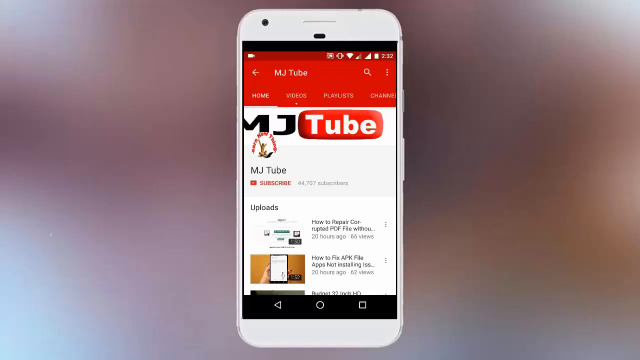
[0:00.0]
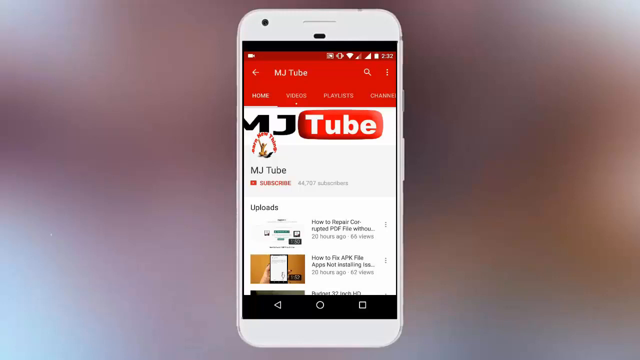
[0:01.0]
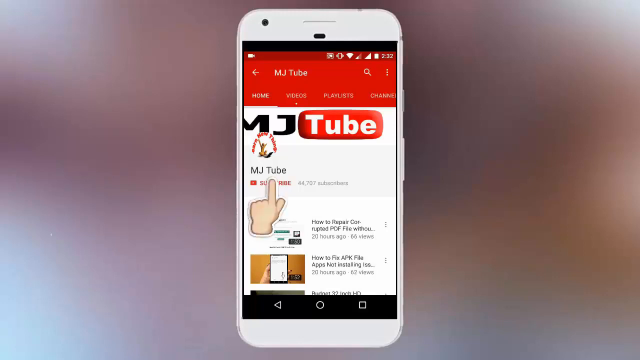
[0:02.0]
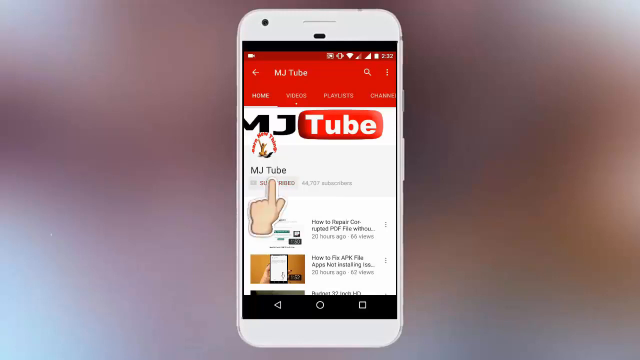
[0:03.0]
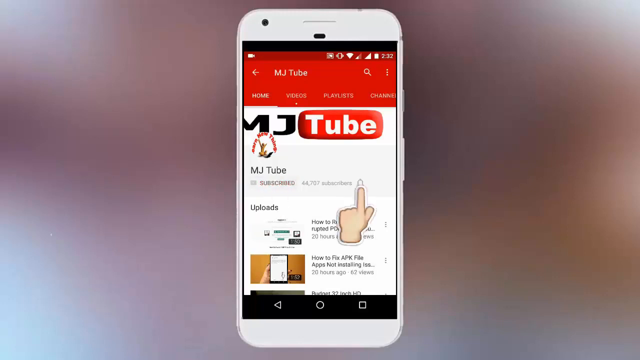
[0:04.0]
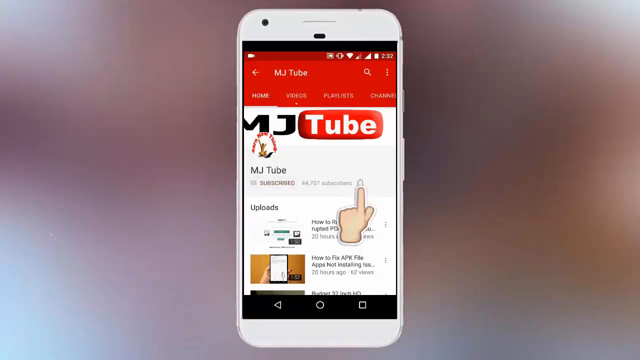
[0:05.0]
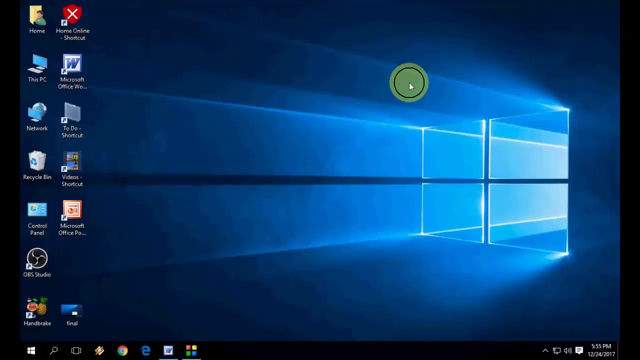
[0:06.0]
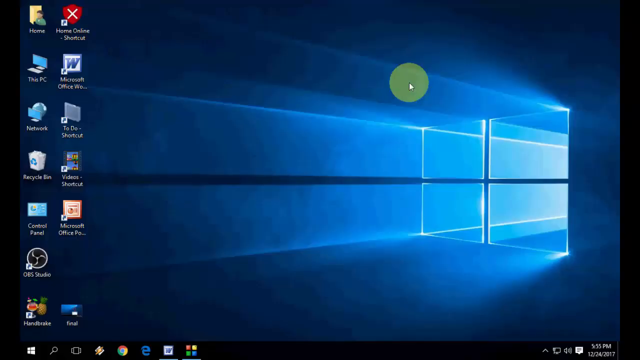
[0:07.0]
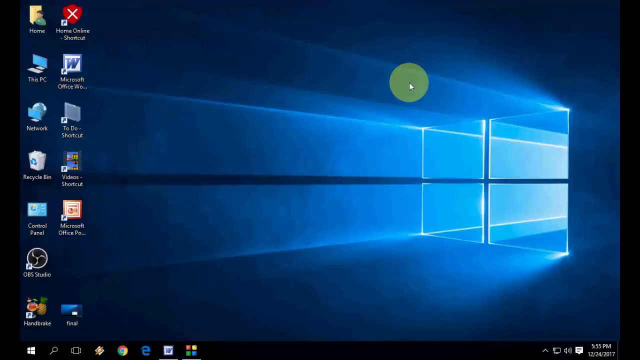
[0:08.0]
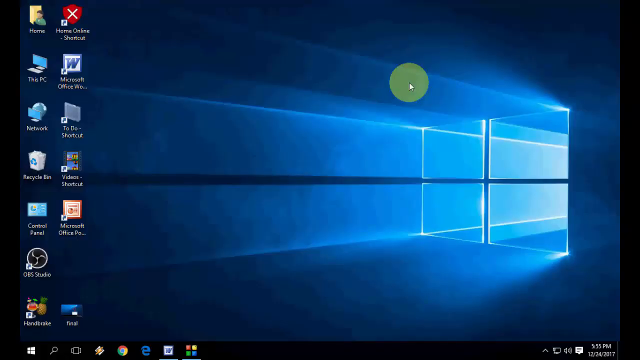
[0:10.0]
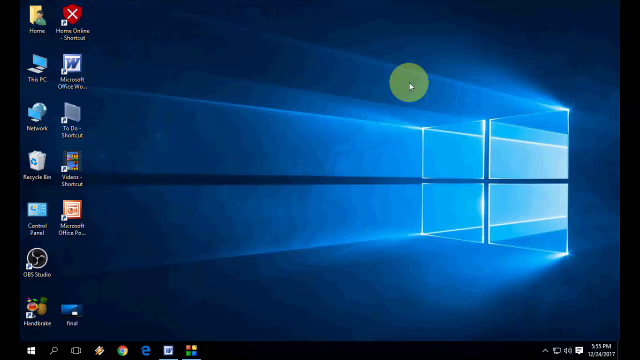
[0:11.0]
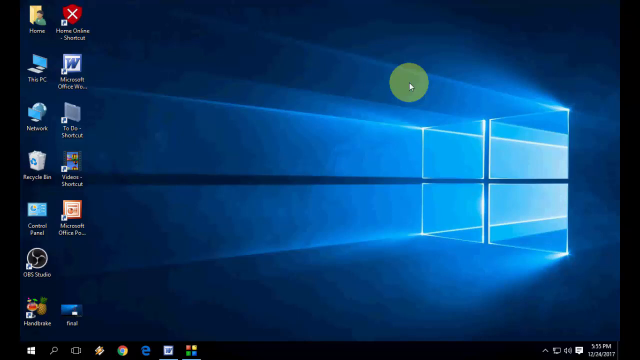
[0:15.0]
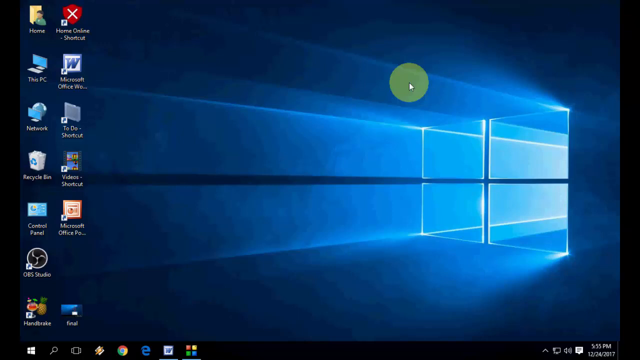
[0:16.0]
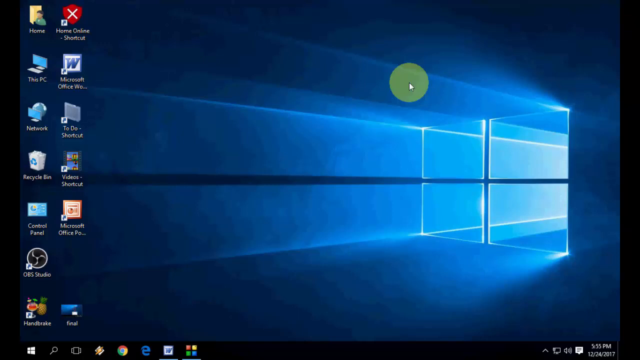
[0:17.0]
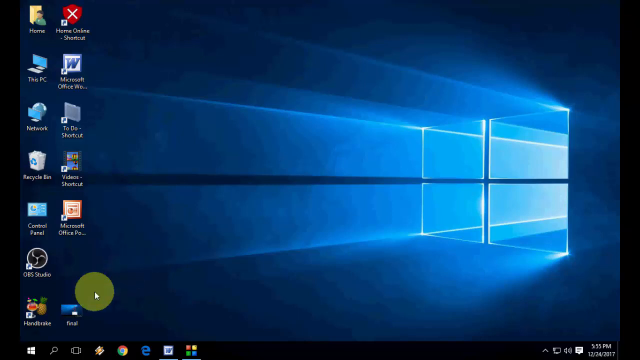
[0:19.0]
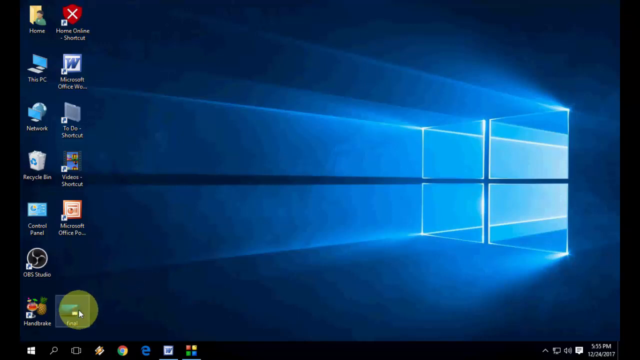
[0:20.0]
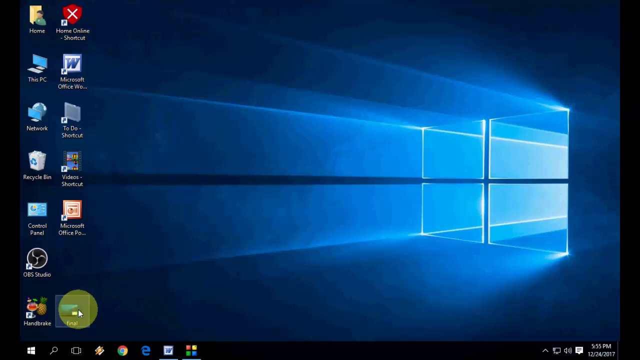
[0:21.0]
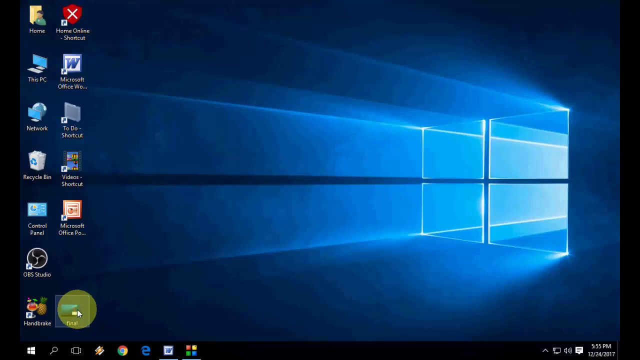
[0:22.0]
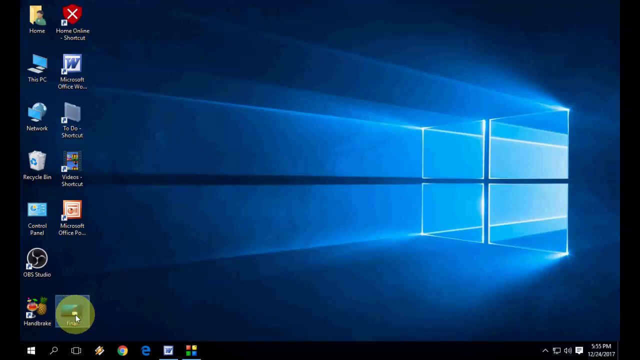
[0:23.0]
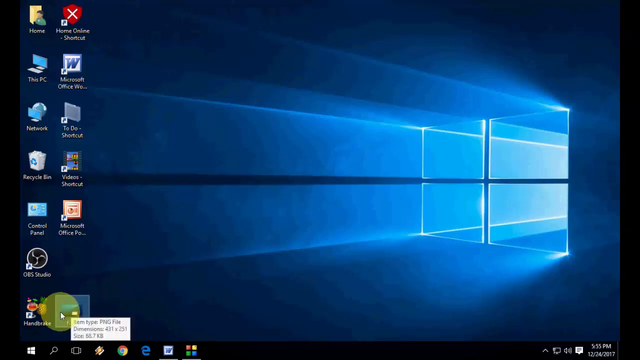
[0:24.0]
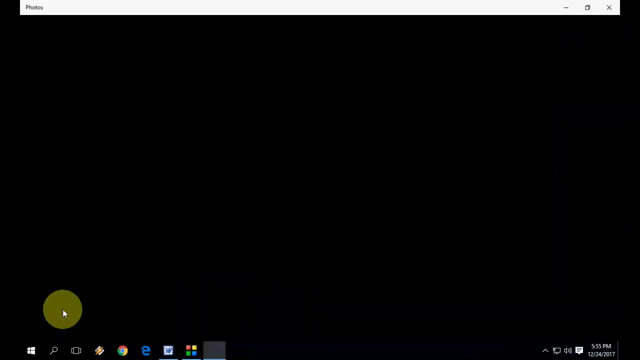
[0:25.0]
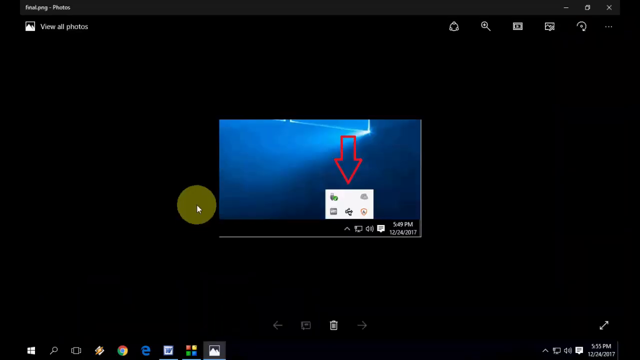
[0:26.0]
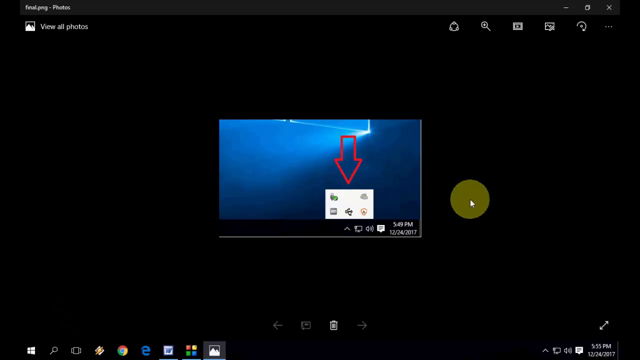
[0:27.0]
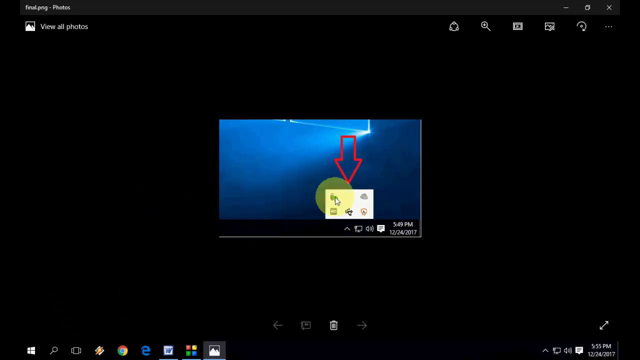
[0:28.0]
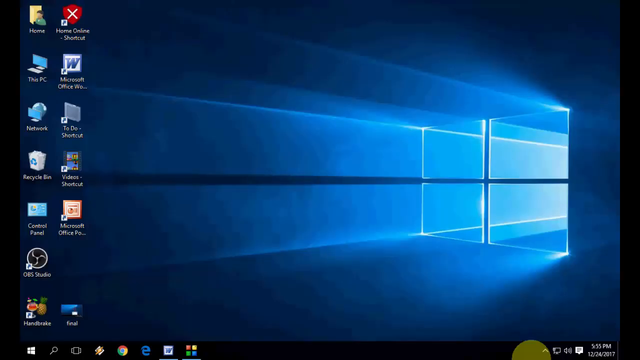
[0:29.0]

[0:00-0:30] The video seems to be a tutorial, apparently made by a YouTuber. It opens on his MJTube homepage, which tells the viewer to subscribe to the channel and shows that he has uploaded many videos, with a few viewers but a lot of subscribers. The video then shows his Windows desktop, which is very organized, with a few applications, including apps for making videos. His mouse cursor has a green dot around it. He opens an image of a screenshot he made of his own desktop, showing that an icon is missing; this is indicated by a red arrow over a blank space.